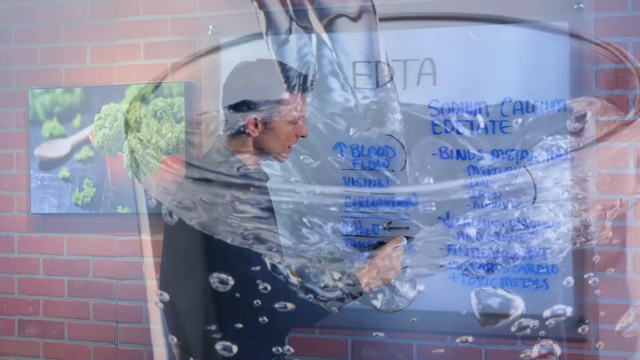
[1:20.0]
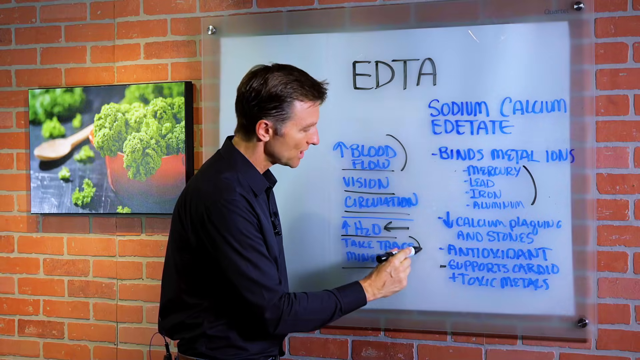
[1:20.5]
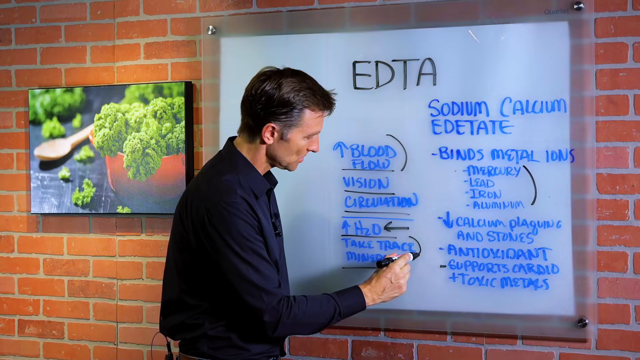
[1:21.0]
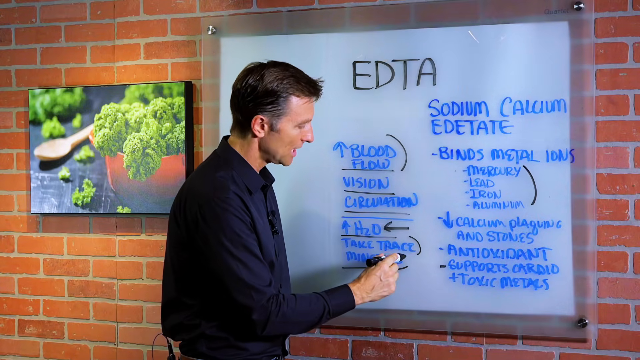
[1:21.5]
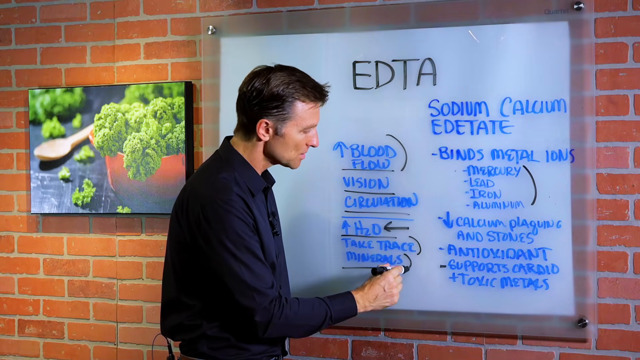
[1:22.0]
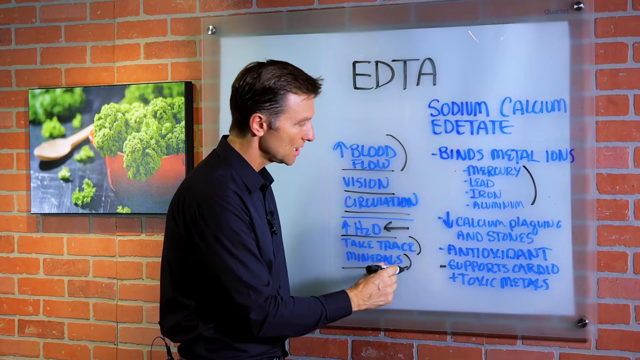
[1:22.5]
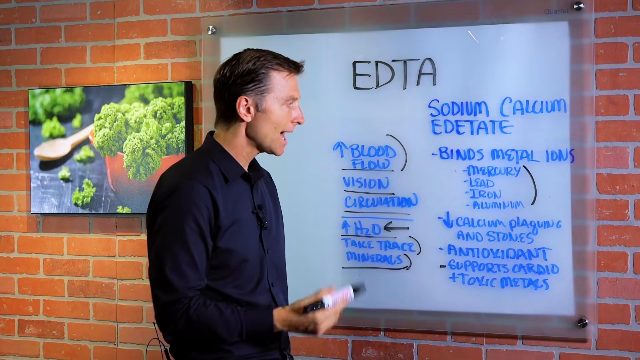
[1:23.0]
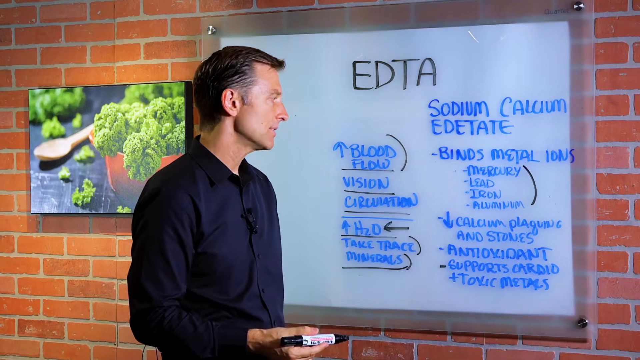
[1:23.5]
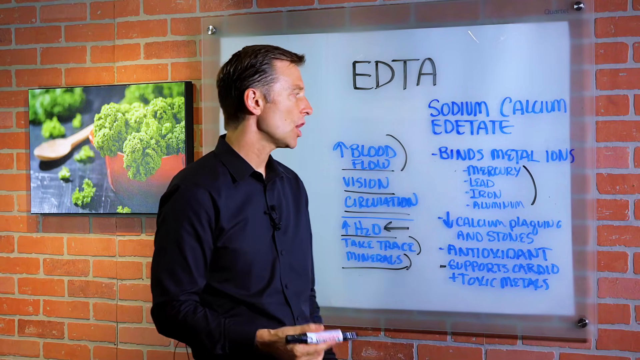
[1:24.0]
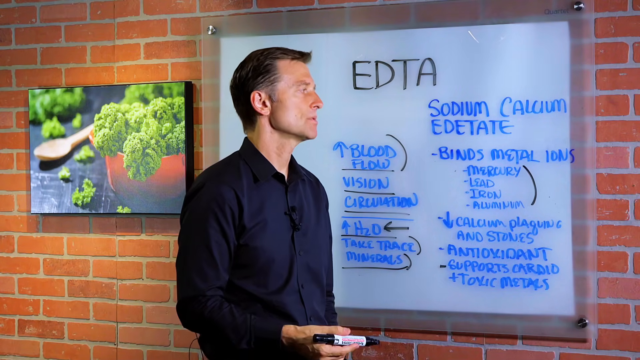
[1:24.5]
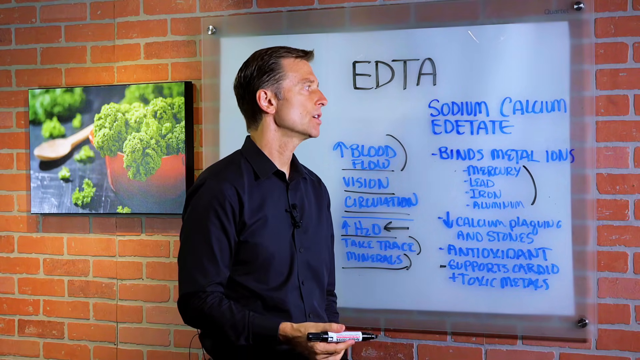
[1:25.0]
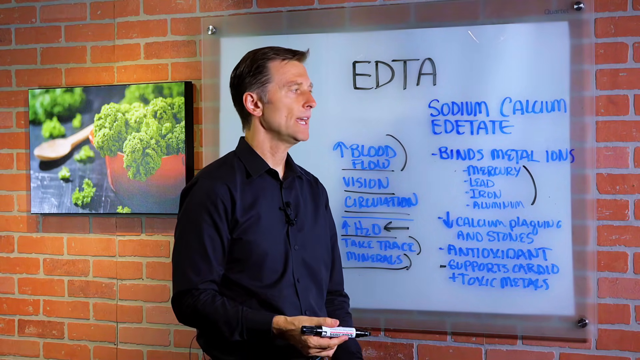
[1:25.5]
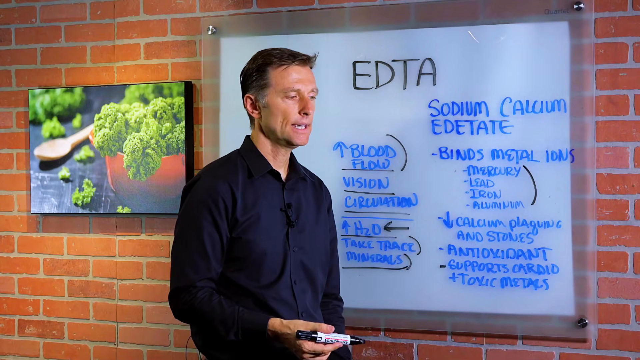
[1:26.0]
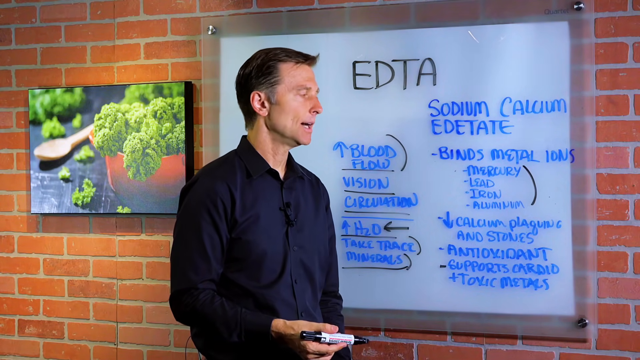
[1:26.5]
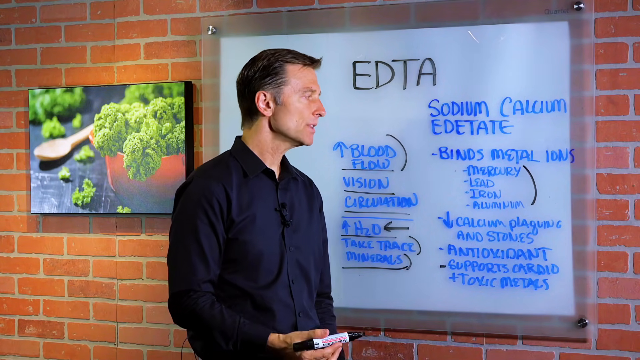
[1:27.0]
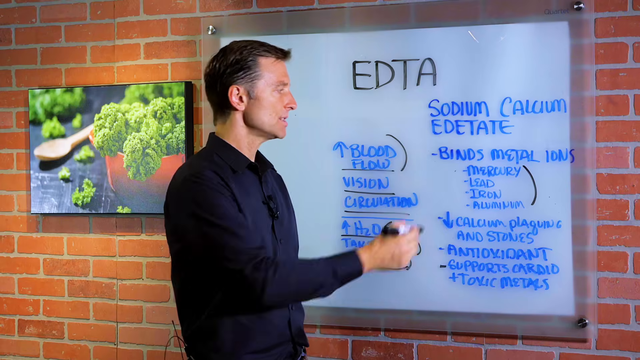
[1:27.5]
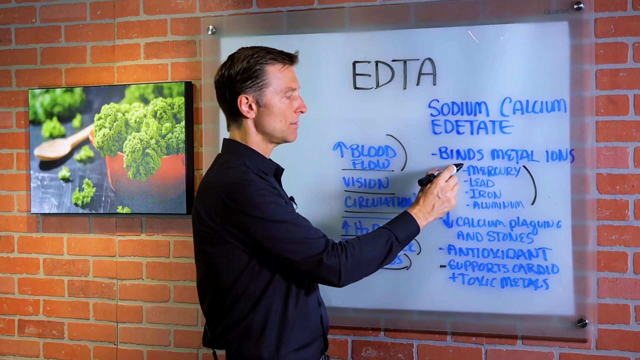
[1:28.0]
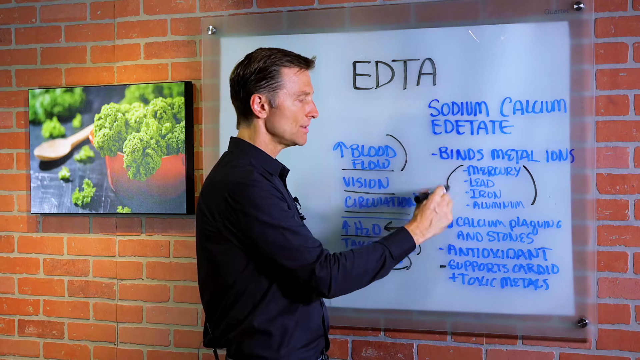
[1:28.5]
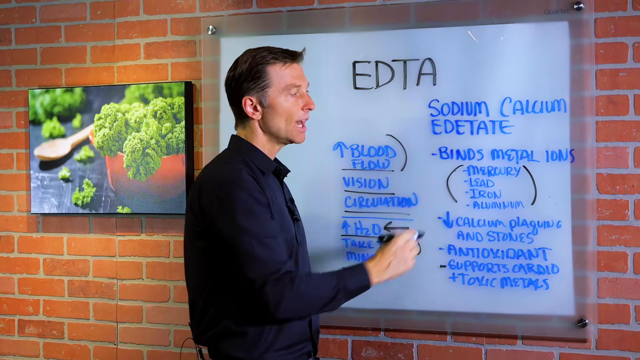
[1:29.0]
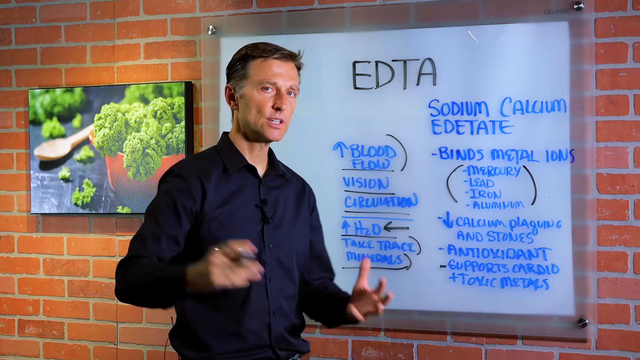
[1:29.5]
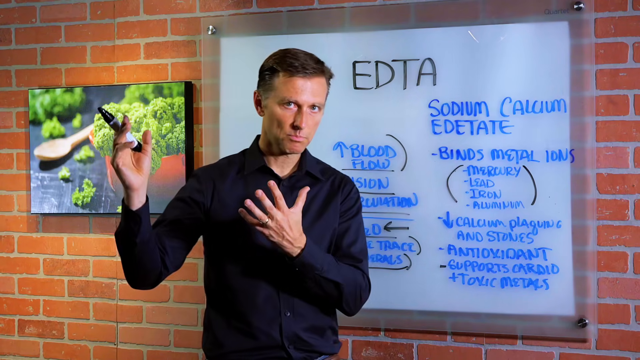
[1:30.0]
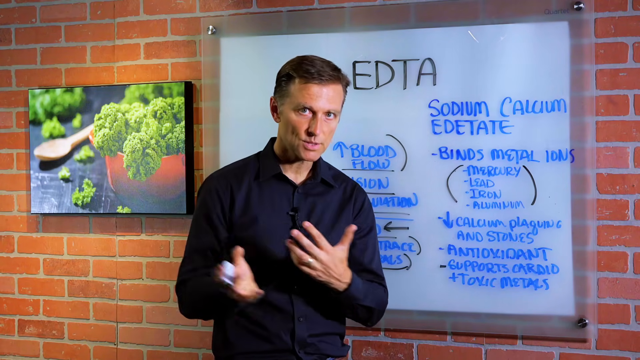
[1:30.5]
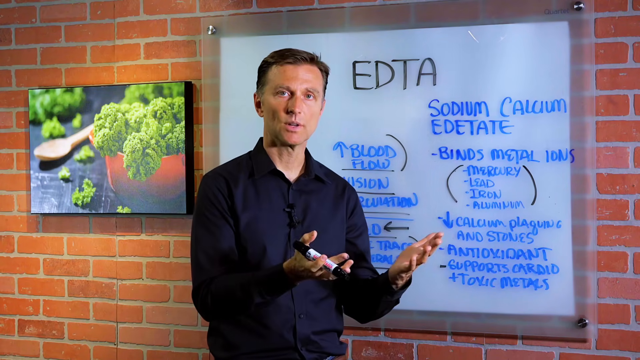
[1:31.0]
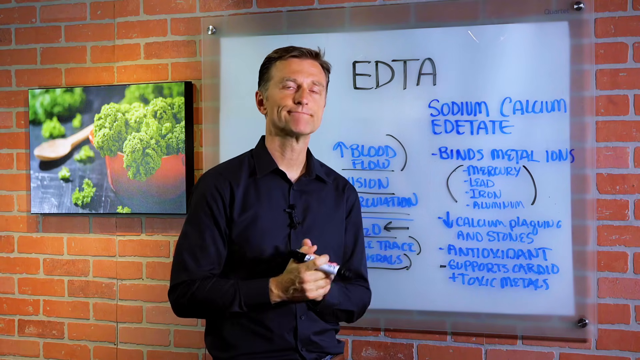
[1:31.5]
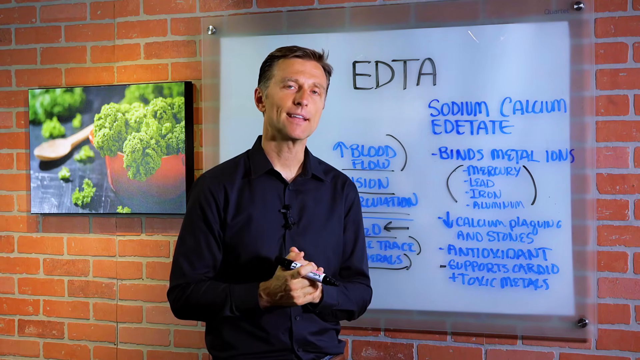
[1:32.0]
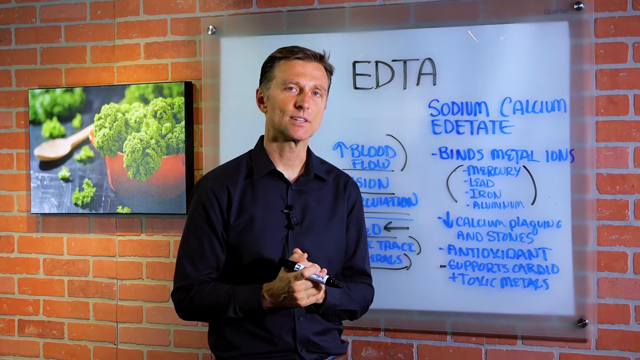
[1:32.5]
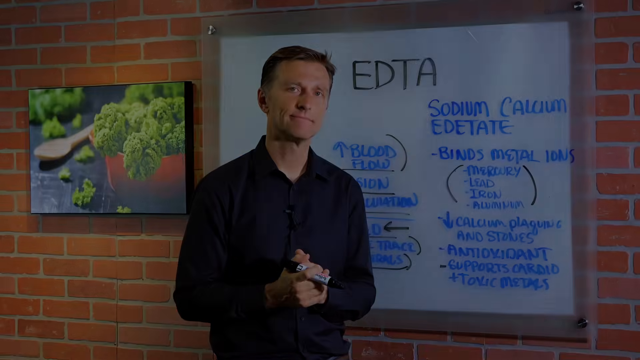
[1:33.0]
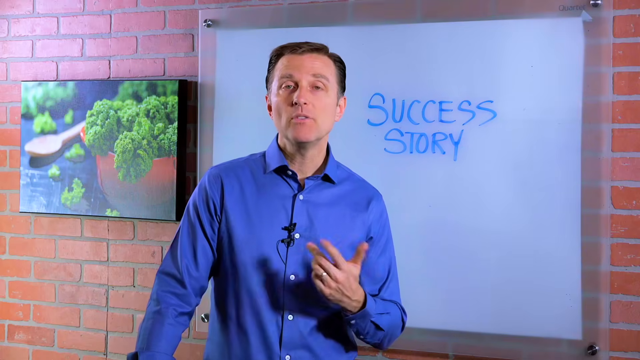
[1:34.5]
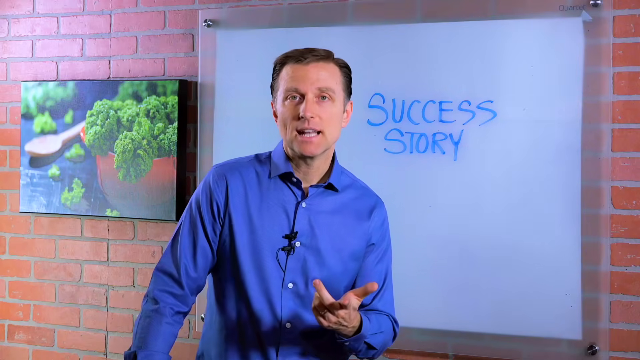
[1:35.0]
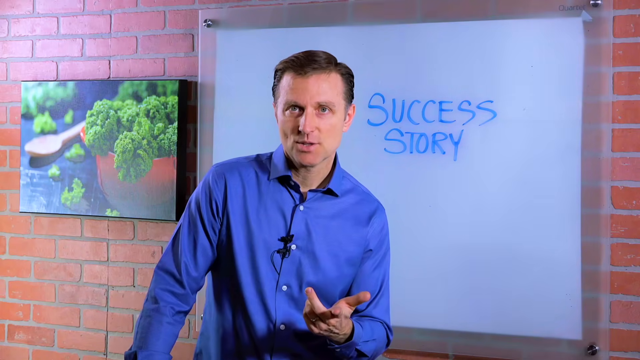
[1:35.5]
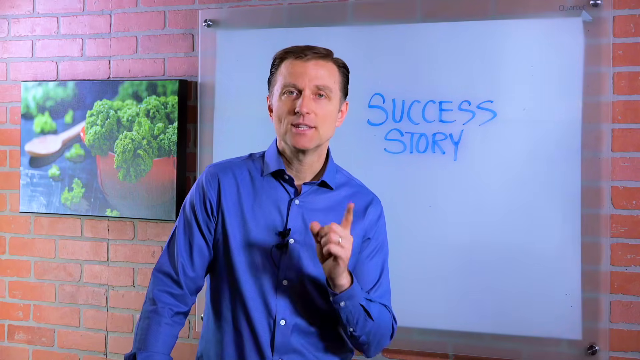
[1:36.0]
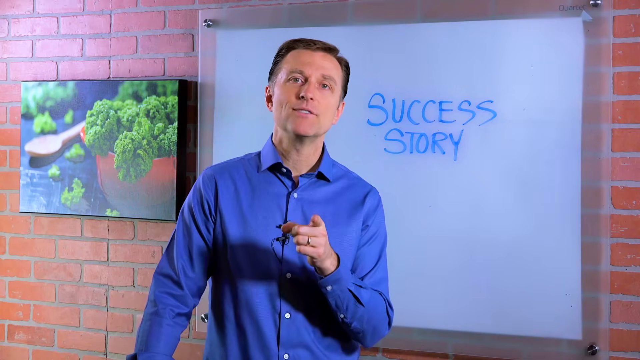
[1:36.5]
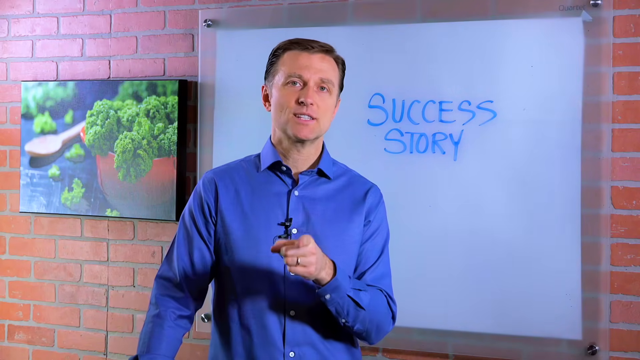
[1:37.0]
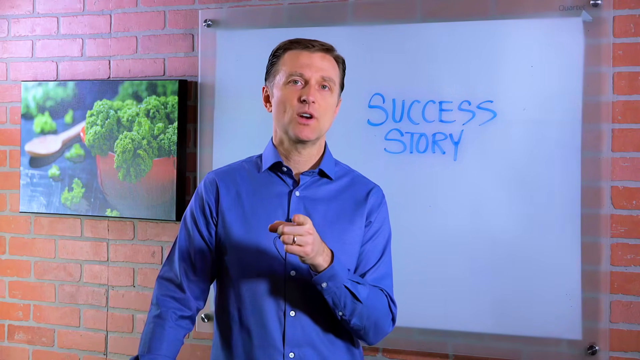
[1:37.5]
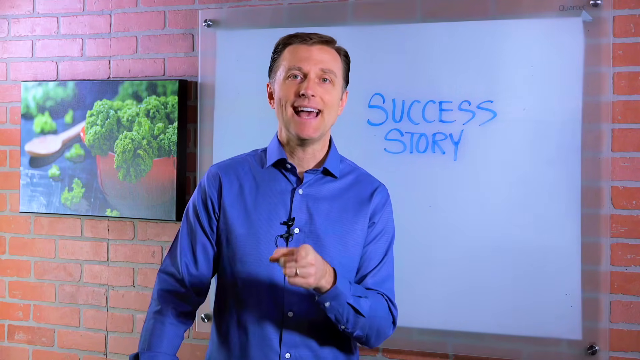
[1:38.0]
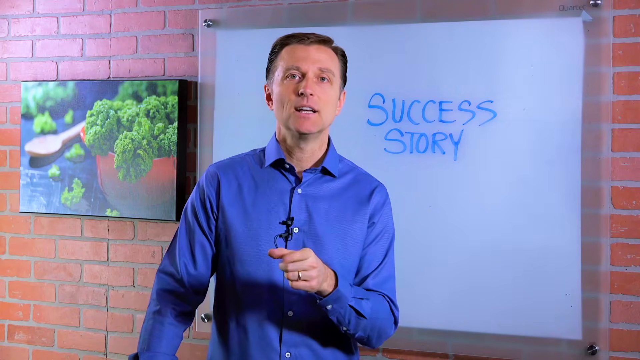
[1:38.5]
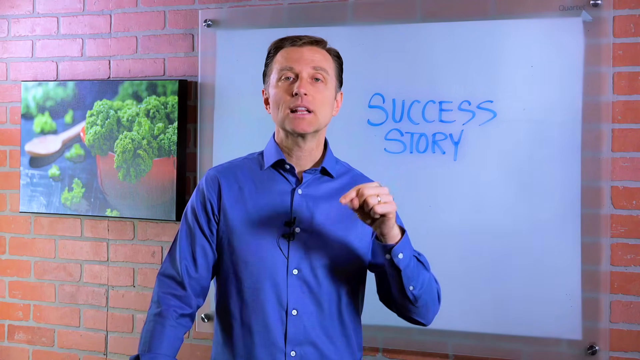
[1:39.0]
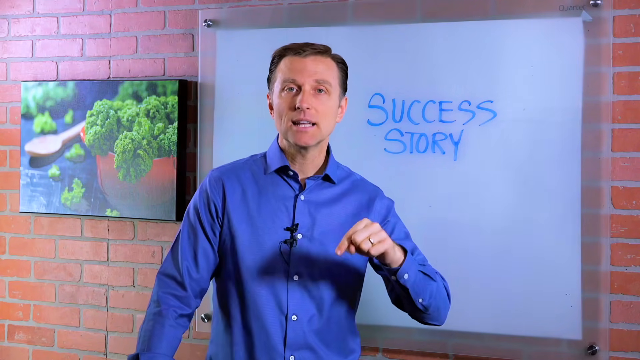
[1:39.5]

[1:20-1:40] A man in a blue shirt has a brick wall behind him, and to his left is a picture of vegetables in a bowl on a table, along with a wooden spoon. With his black marker he draws a parenthesis on the right of "minerals and trace". He moves the marker up and down in his right hand, away from the whiteboard, speaking while looking at the whiteboard. He then draws a parenthesis on the left side of the words "mercury, lead, iron, and aluminum". He turns back toward the camera and, speaking, slowly swings his right and left hands to the left in an expressive motion. He claps his hands together as the scene fades to black. The man in the blue shirt is then still standing in front of the brick wall, but the whiteboard now has only the words "success story" on it. He continues talking to the camera, pointing at it with his left hand, then points down to the ground with his left index finger.